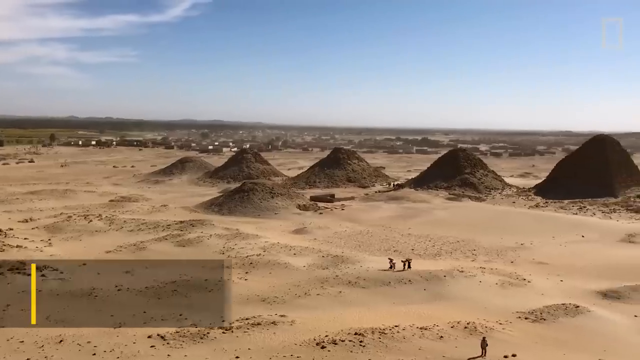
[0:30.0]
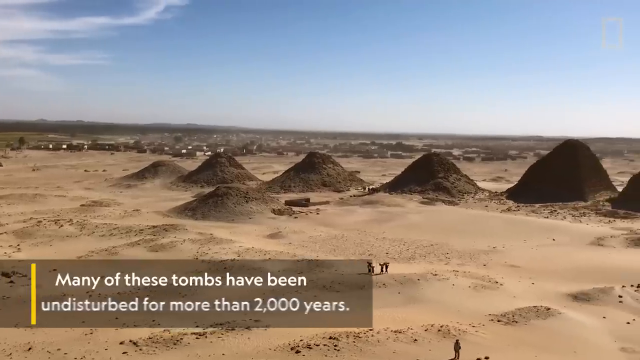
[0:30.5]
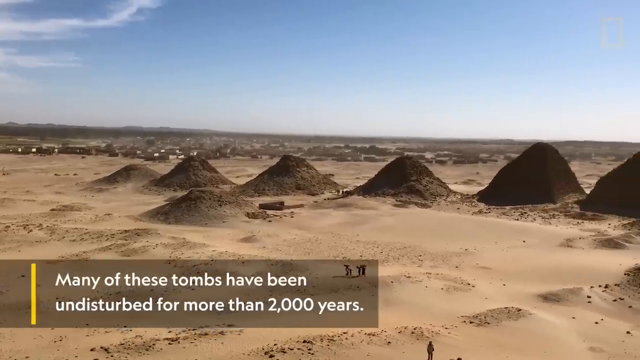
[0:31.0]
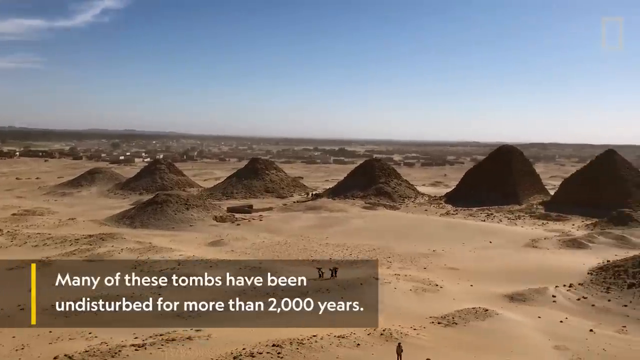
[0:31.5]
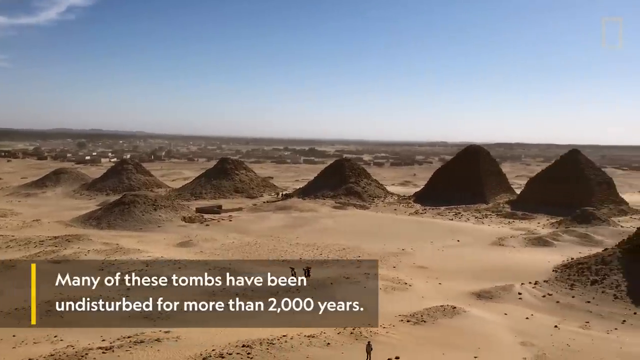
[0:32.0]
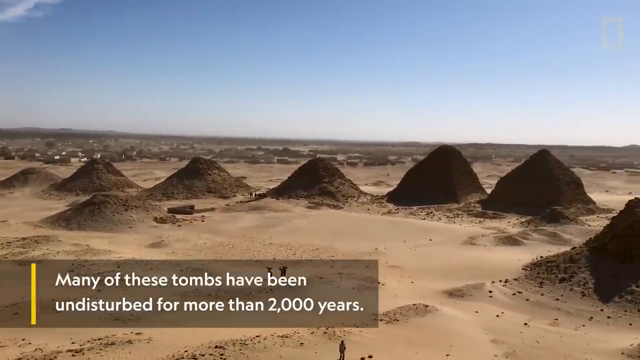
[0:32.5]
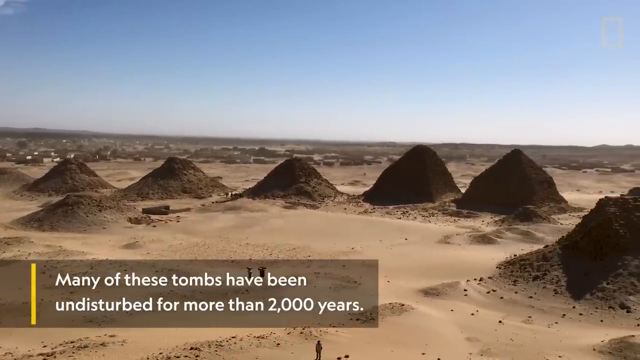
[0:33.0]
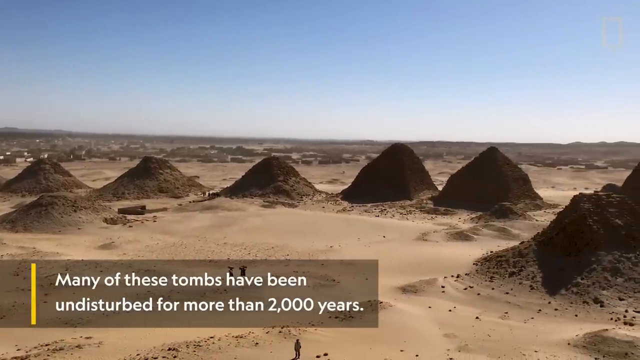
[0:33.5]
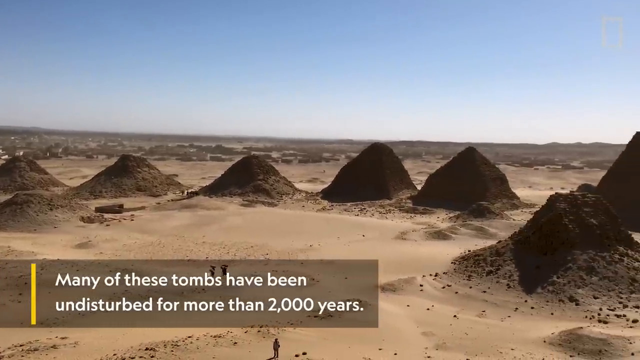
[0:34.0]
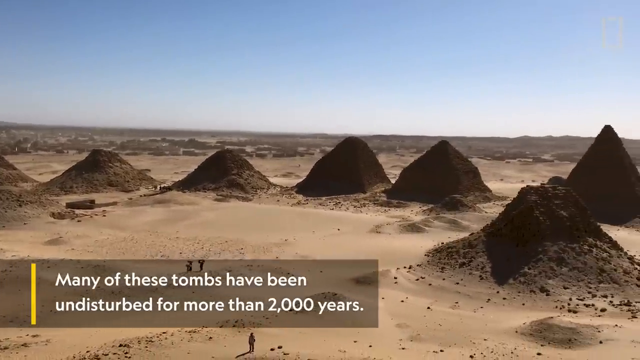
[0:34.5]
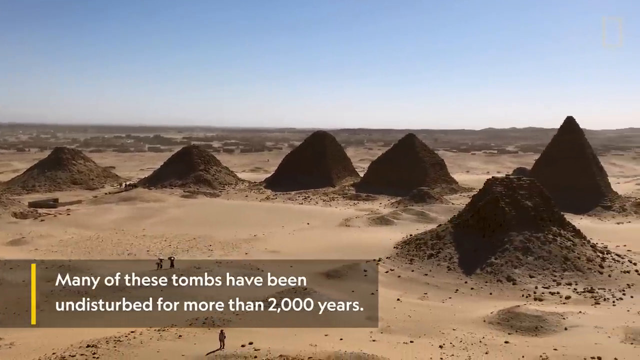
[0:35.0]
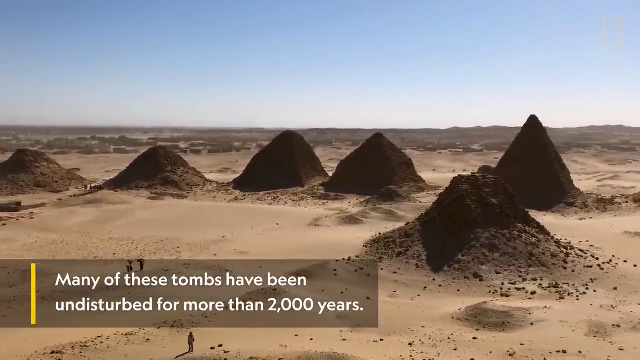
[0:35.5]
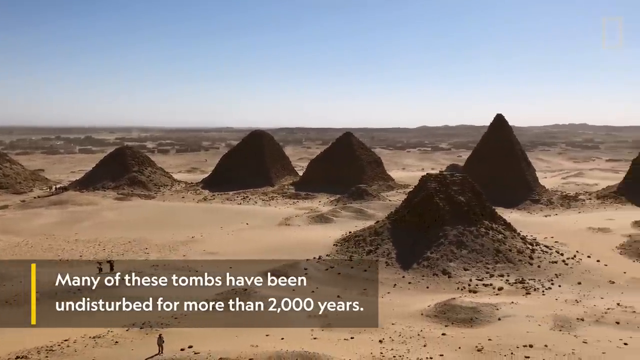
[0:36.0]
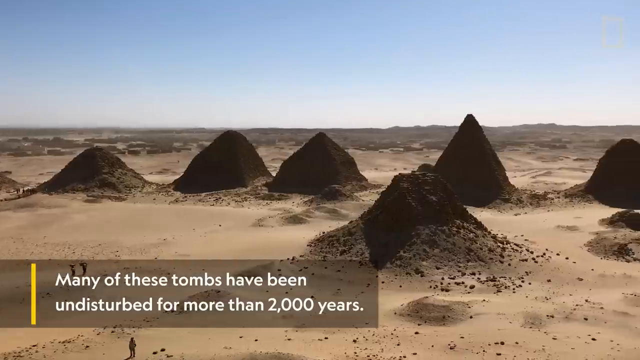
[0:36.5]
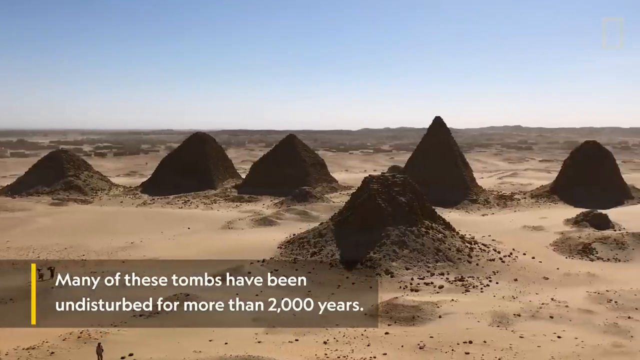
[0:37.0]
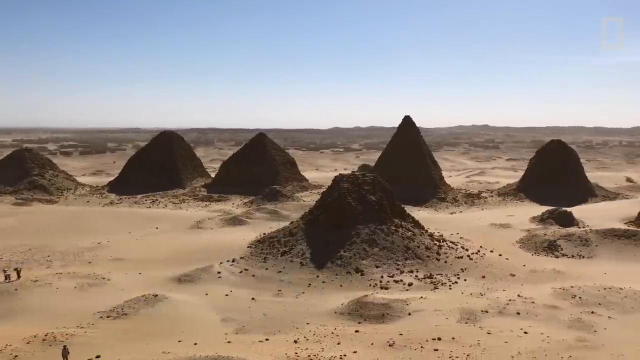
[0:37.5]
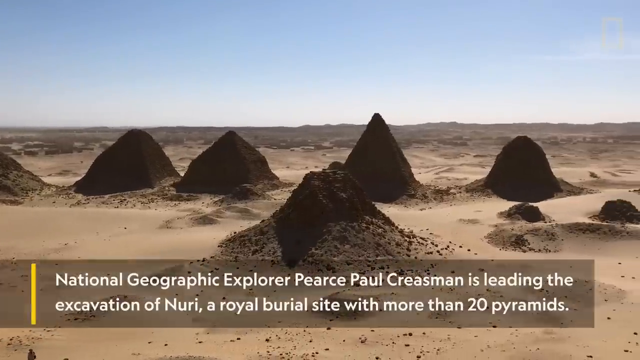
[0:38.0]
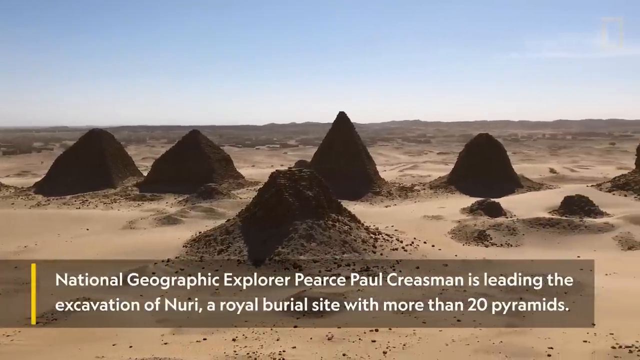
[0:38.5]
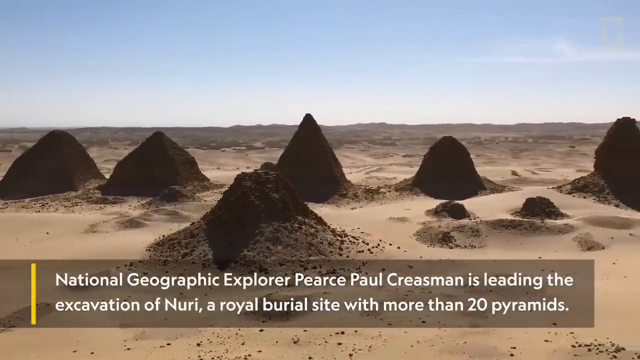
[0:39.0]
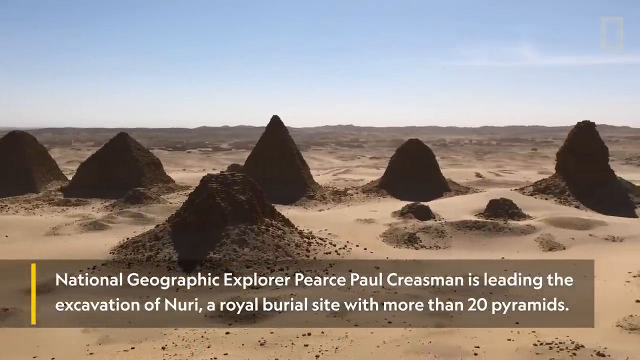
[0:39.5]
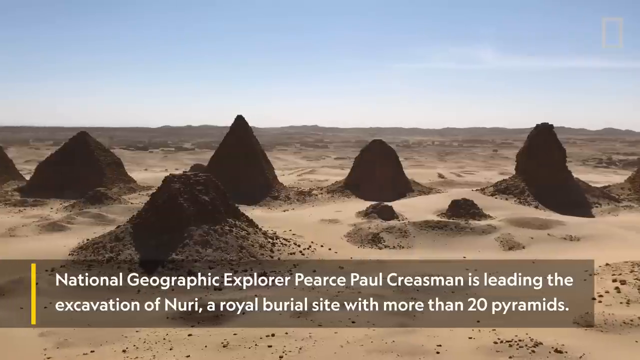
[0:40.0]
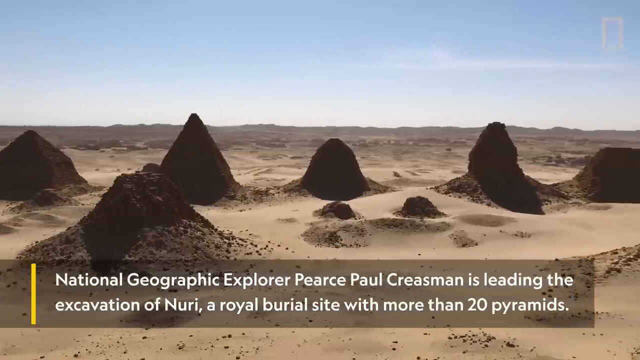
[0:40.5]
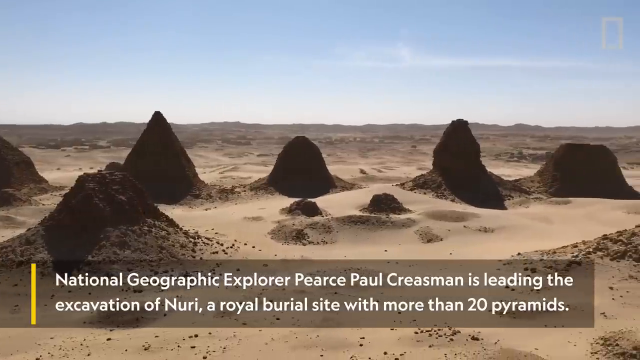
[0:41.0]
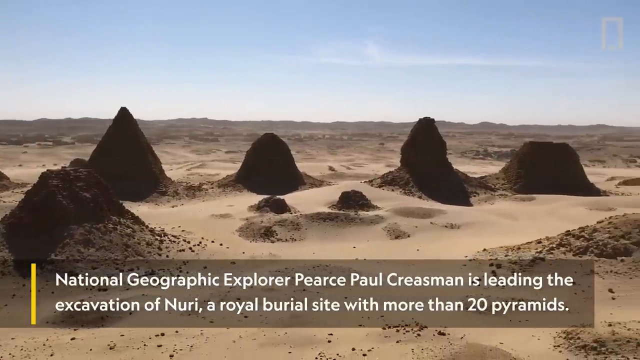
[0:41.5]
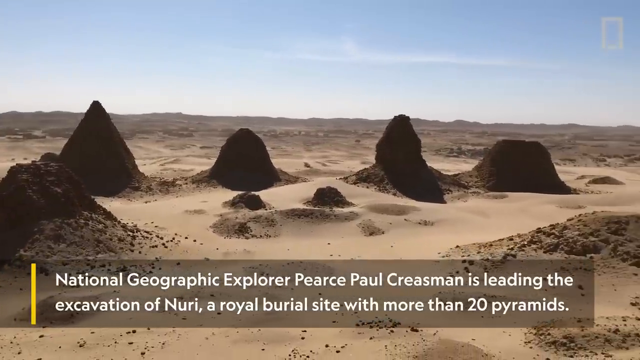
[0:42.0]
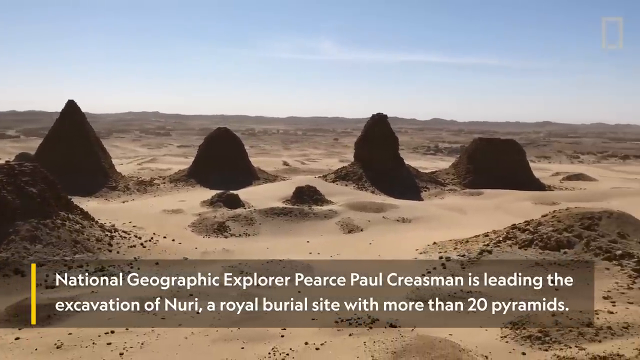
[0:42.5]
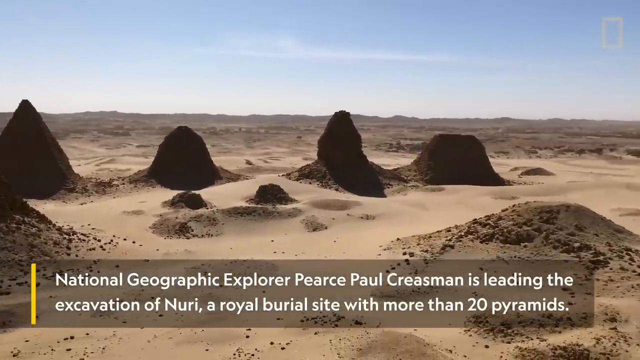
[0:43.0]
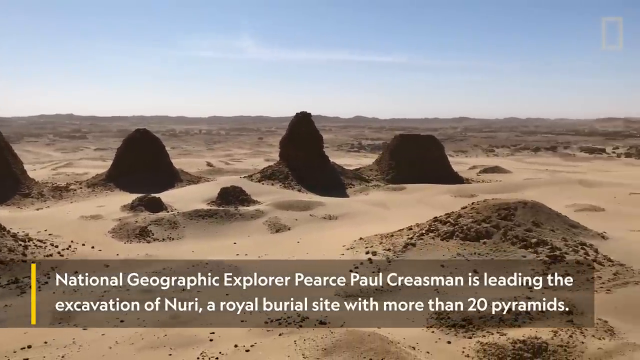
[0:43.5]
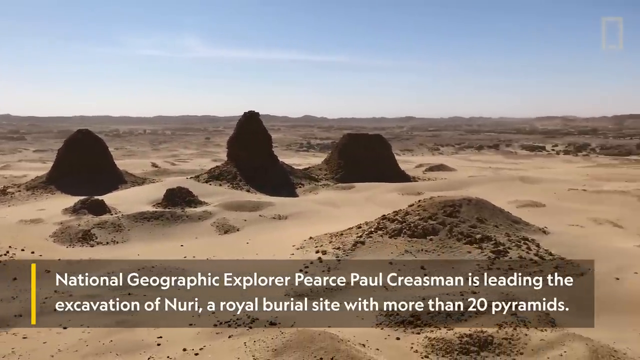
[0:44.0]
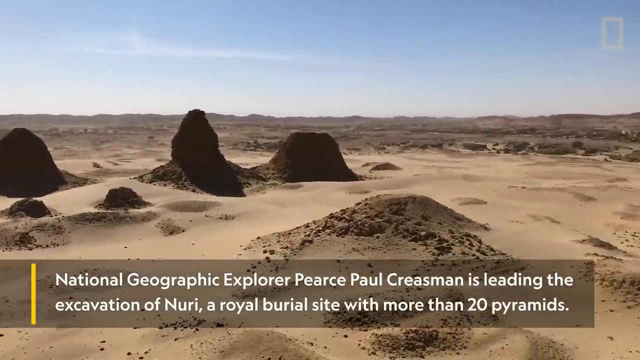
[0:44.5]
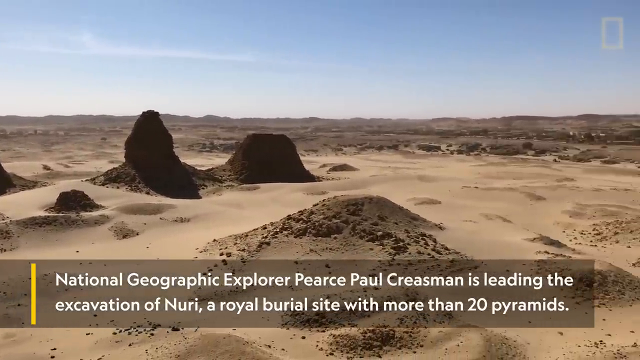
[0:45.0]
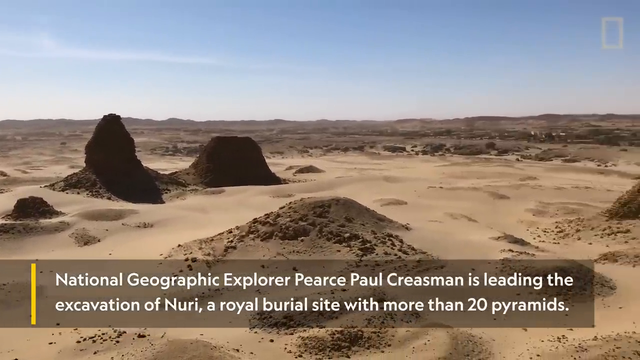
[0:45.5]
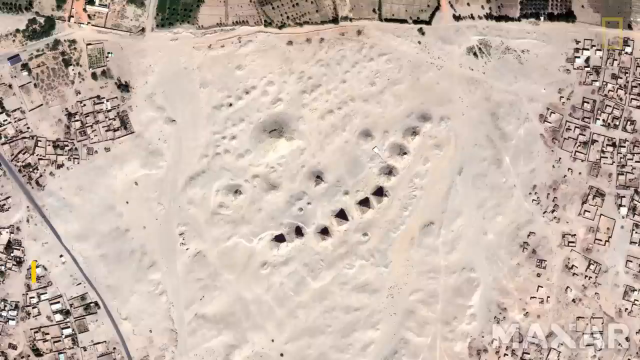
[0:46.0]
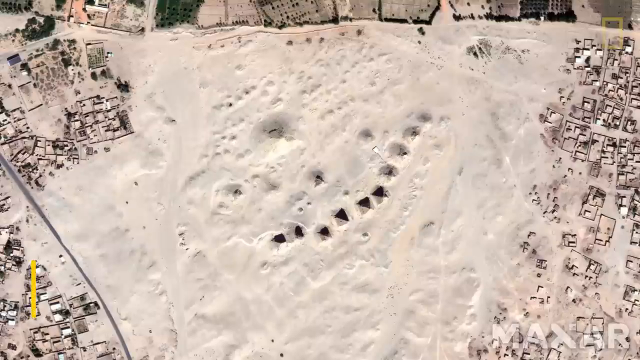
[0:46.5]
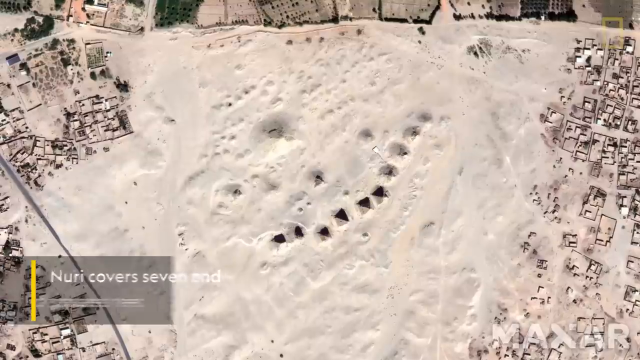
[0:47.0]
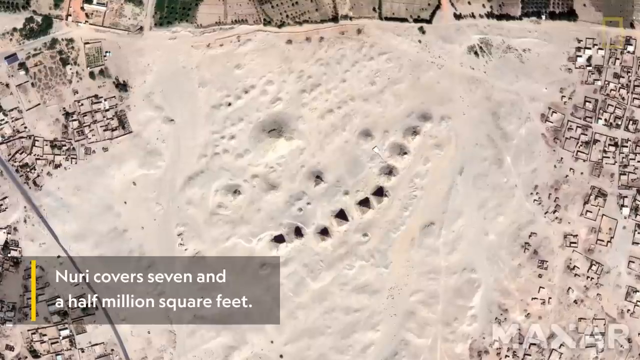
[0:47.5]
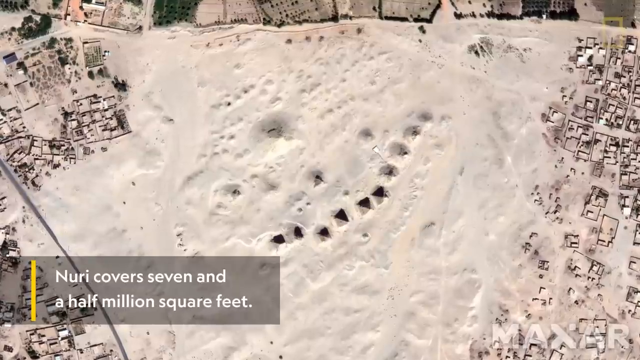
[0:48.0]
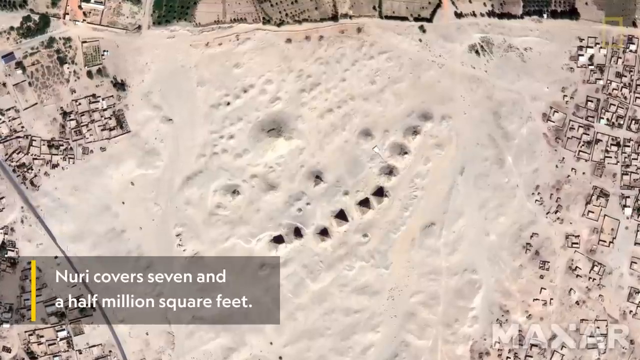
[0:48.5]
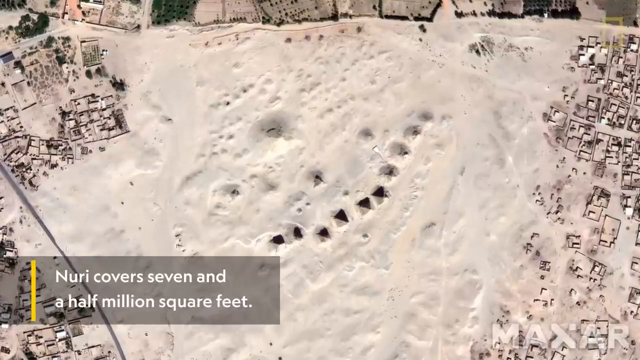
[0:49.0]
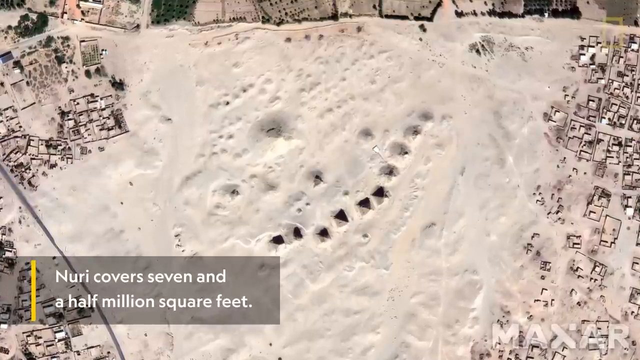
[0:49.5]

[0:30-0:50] The site has been undisturbed for 2,200 years, and National Geographic is there excavating these old pyramids at Urey, an excavation led by explorer Pierce Paul Creasman across a seven and a half million square foot space. It is a raw burial site. There are not many footsteps in the sand; there is just a lot of open air and old pyramids, some of them in decay, which look like huge ant mounds in the middle of the desert. The area, in Northern Sudan, is very dry desert with no greenery, nothing but dirt and sky.